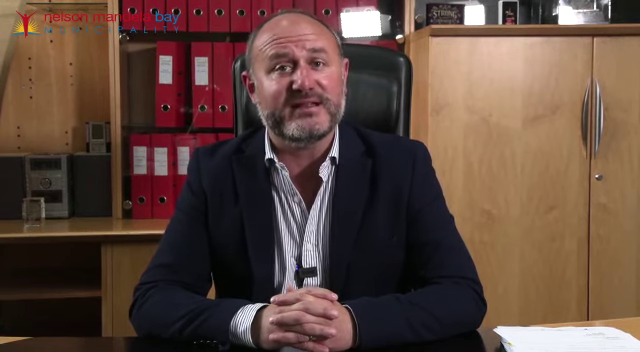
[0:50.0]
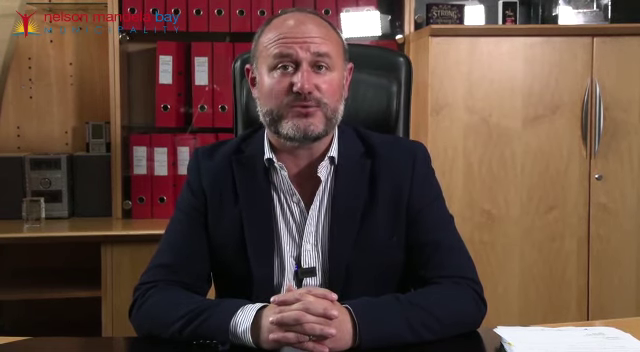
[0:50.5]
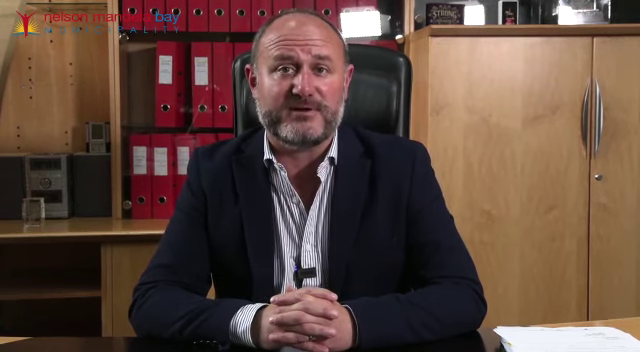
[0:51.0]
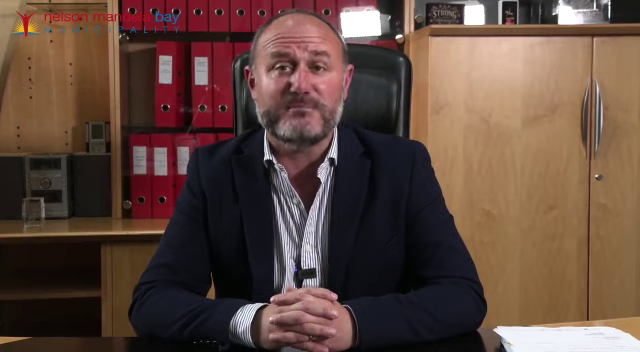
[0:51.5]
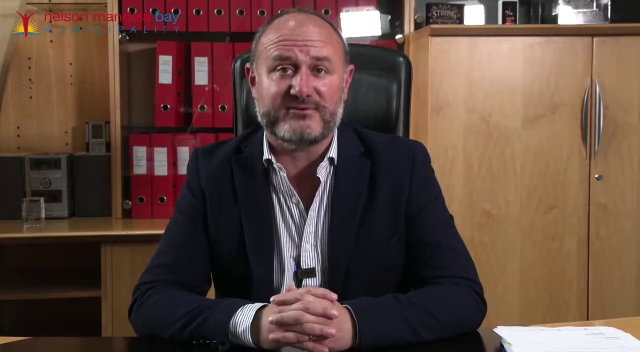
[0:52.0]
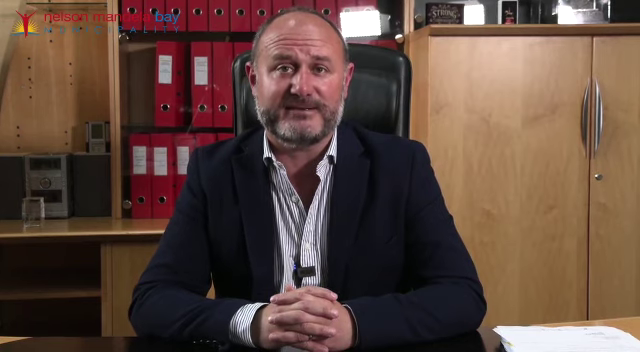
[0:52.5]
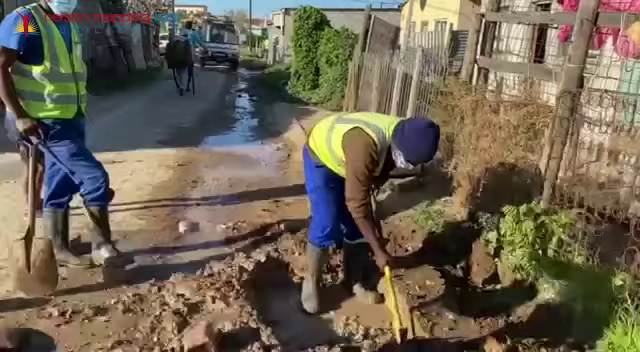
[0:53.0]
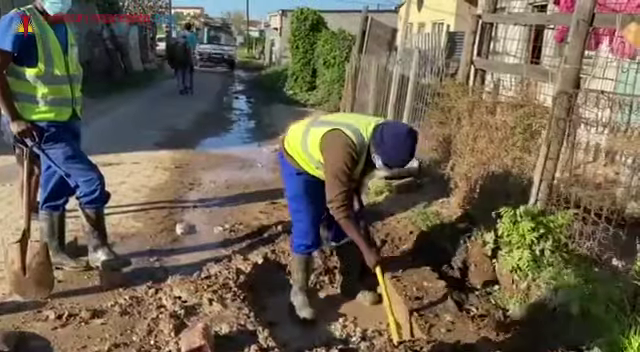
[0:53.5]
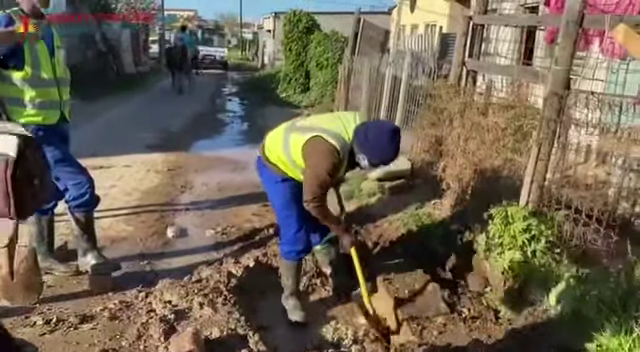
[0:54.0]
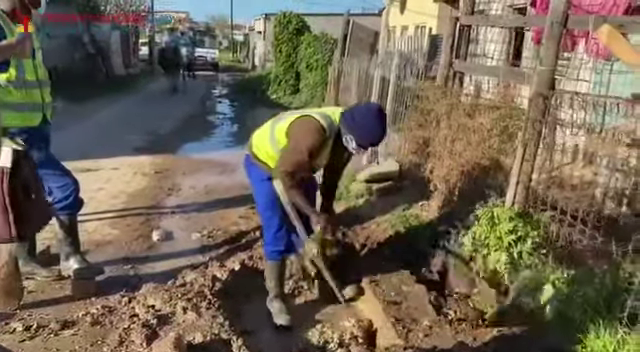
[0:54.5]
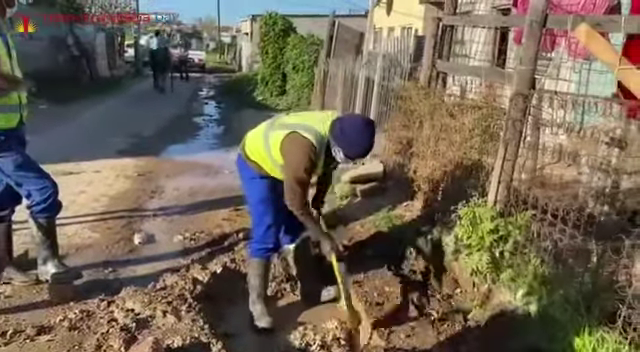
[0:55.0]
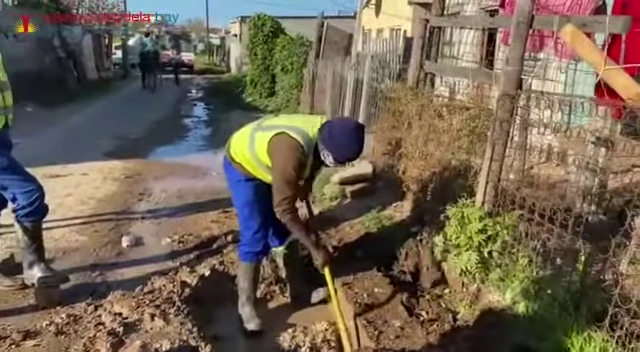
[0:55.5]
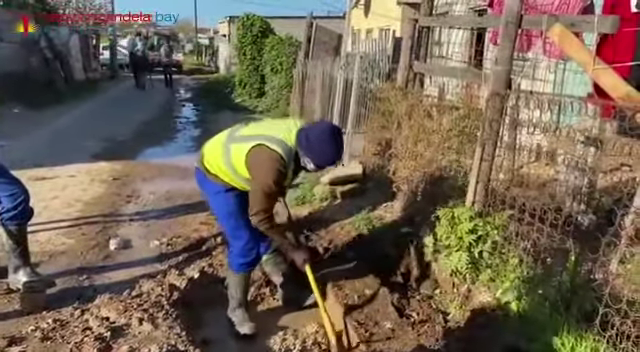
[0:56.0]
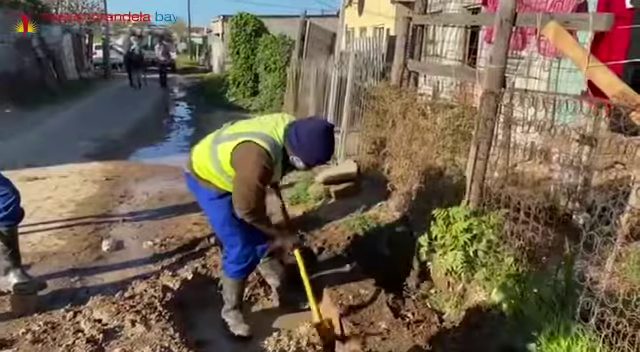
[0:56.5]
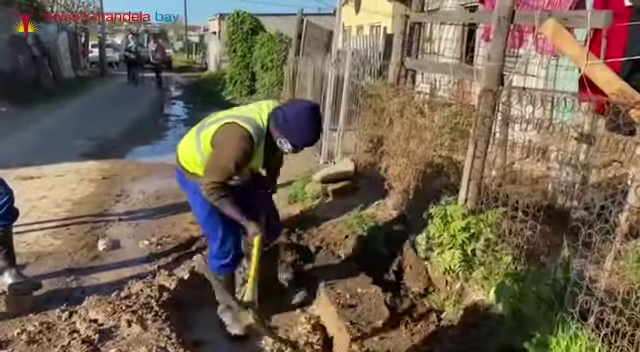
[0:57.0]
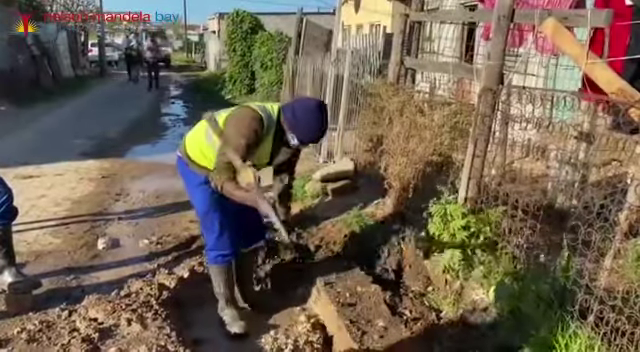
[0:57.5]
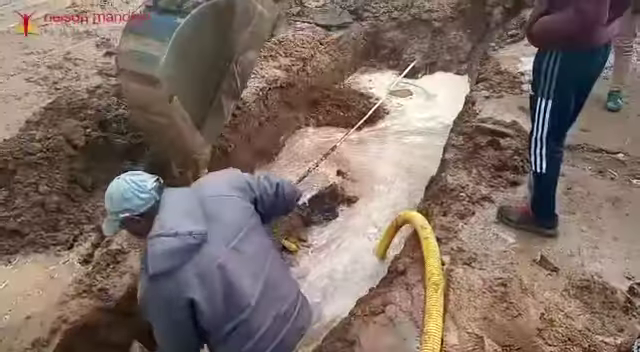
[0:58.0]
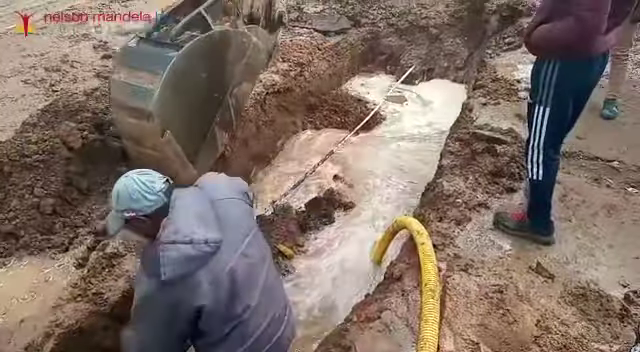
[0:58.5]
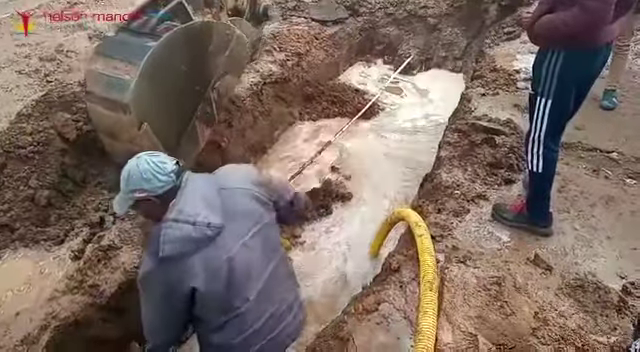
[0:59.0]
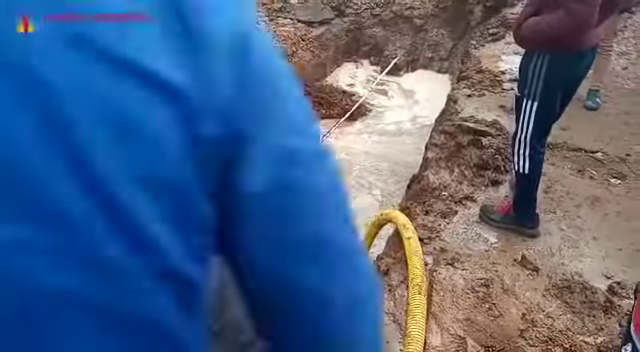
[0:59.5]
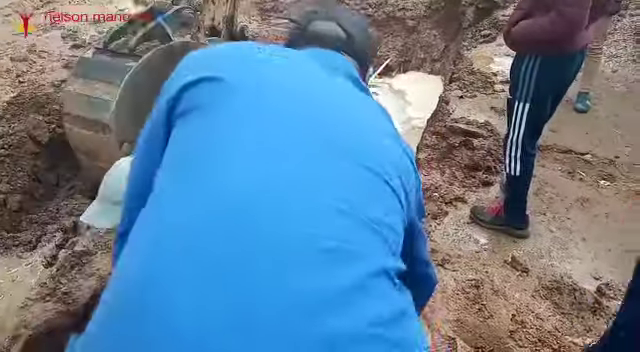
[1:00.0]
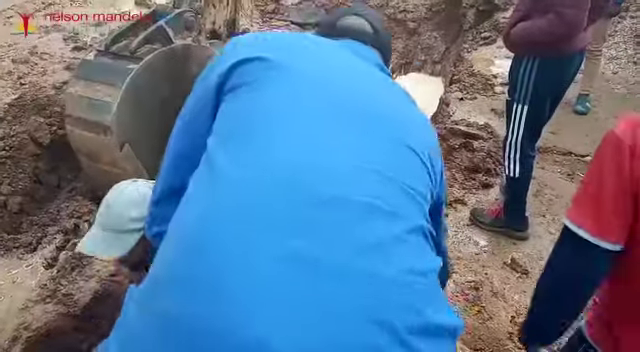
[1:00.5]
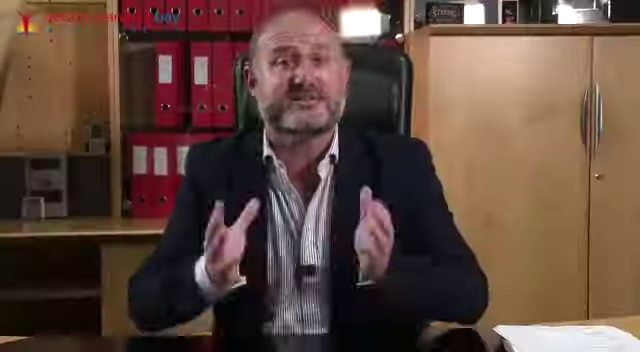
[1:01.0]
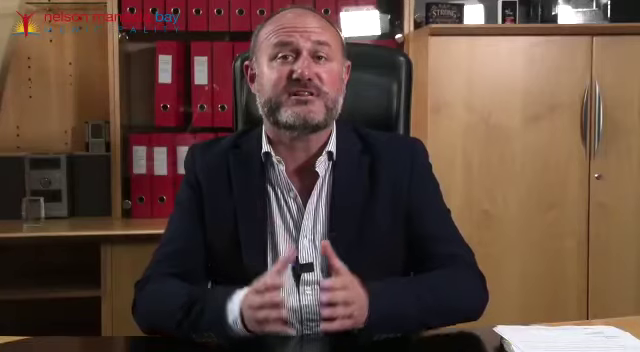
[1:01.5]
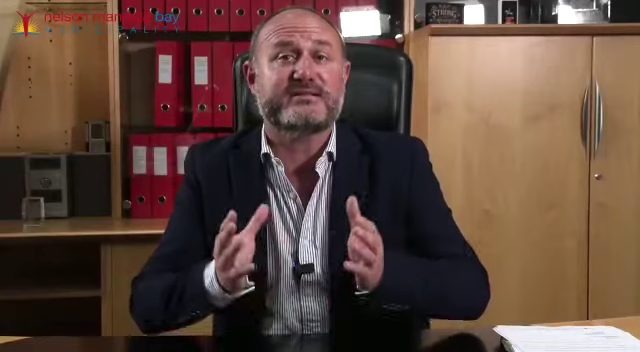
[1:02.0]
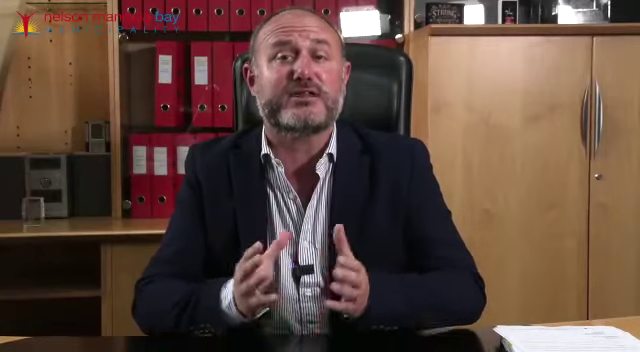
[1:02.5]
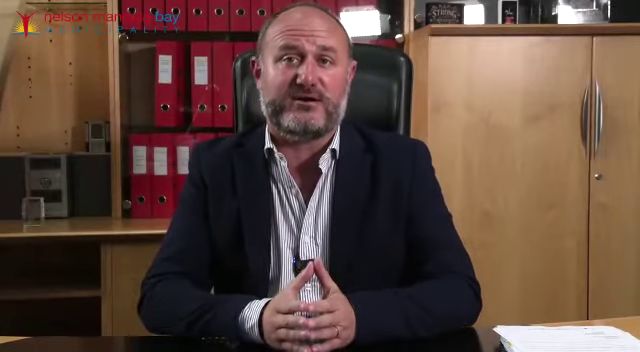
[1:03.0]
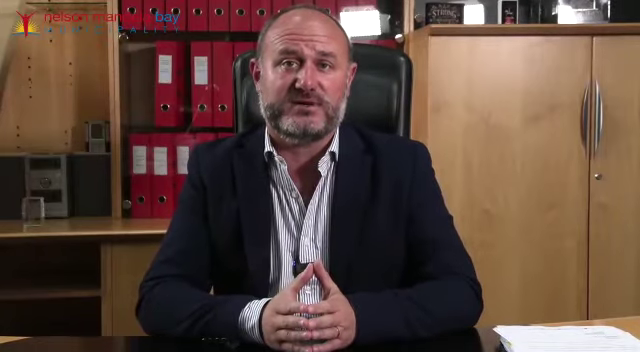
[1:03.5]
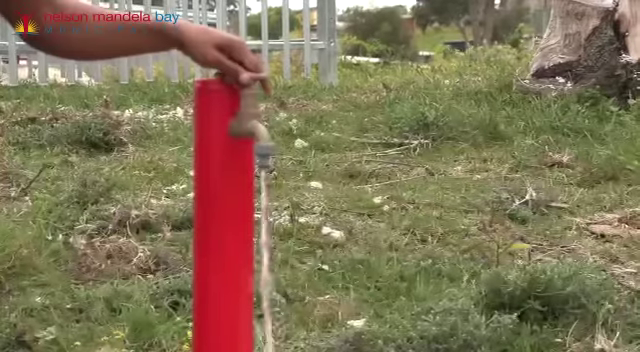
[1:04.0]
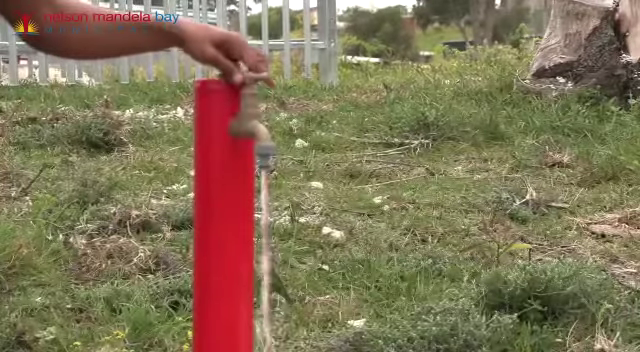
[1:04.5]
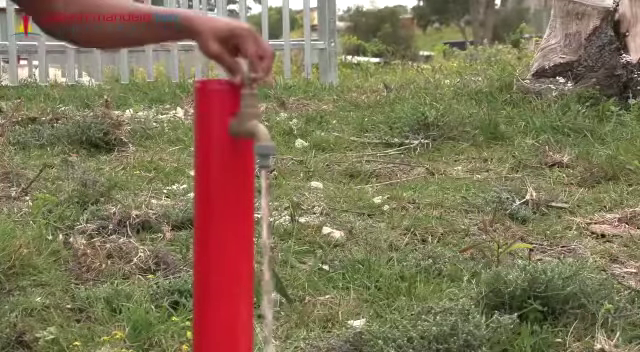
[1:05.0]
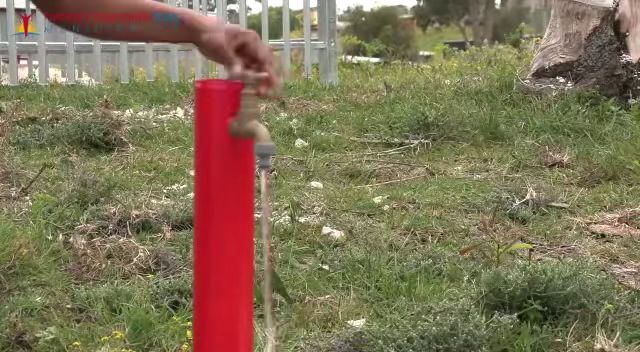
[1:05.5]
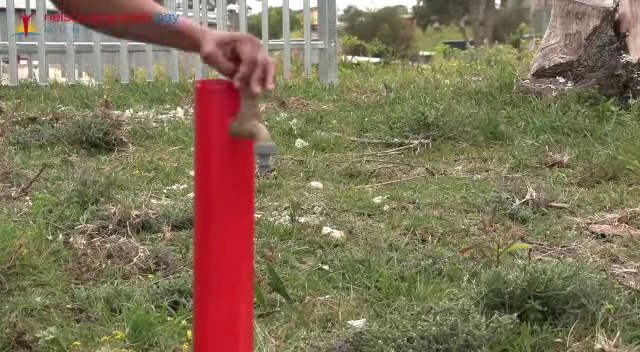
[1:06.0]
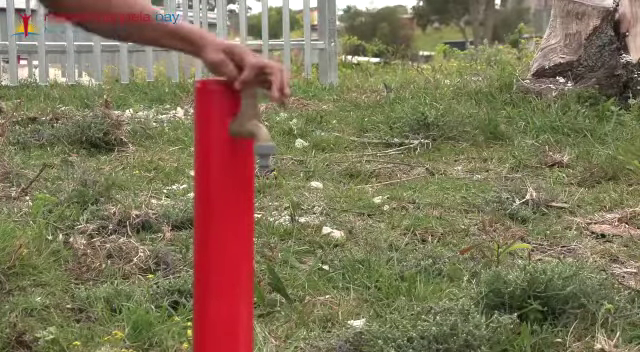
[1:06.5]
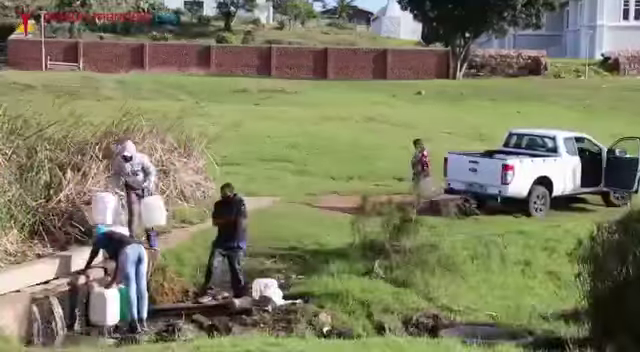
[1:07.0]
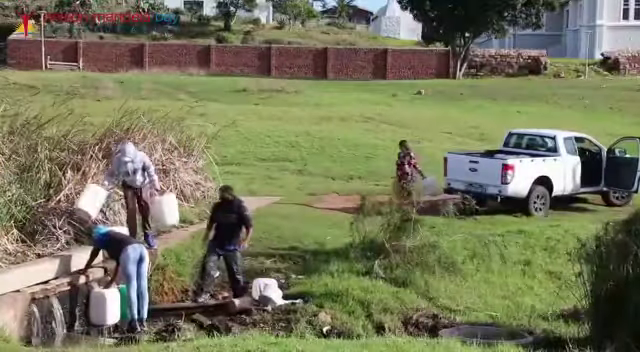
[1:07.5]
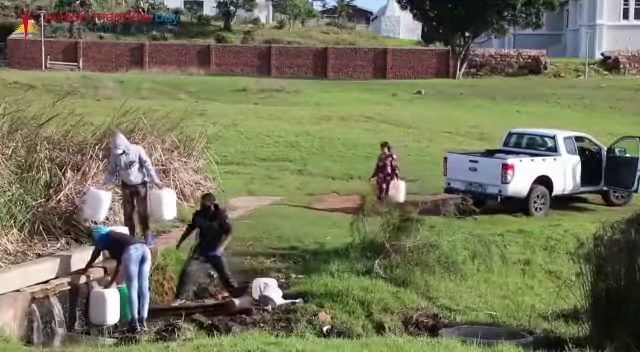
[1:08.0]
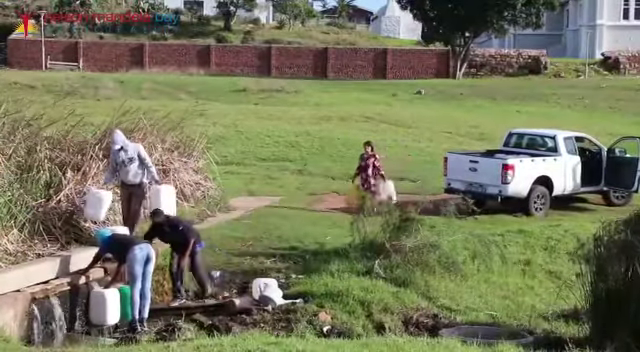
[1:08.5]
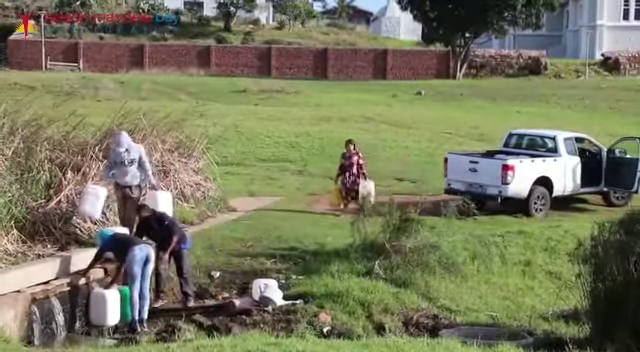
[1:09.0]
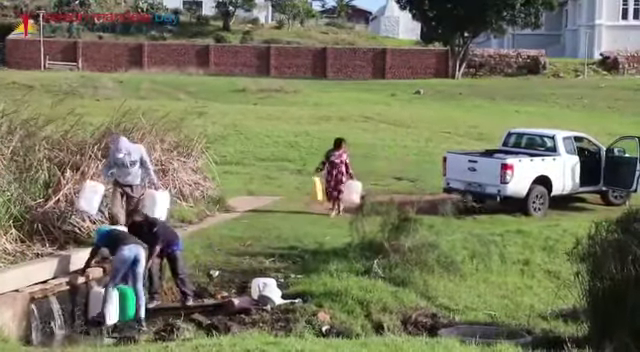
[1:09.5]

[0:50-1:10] The same man talks directly to the viewer. Outdoor footage follows, showing a worker in a neon green vest digging with a pickaxe to release water and make it flow better. Another shot shows another man digging at the ground while a giant crane also digs at the ground. A close-up shows someone cranking a water pipe as water comes out. Afterwards, people are apparently loading water into a truck.